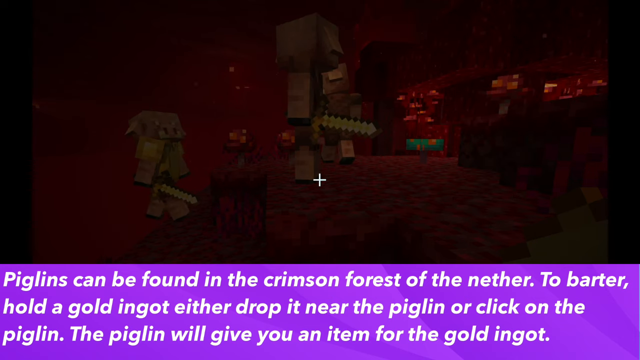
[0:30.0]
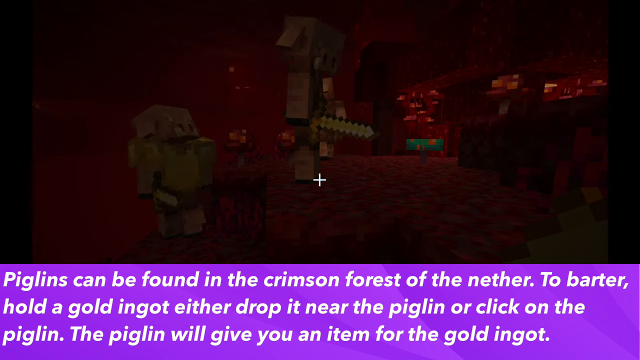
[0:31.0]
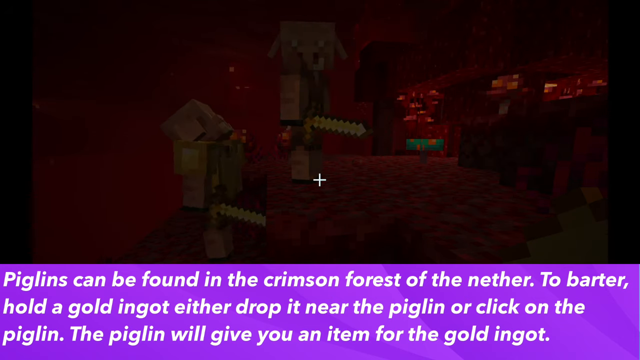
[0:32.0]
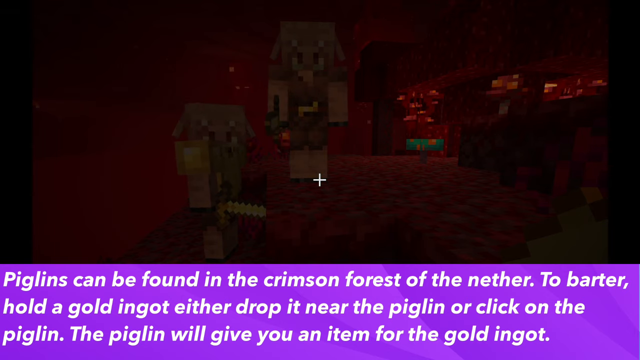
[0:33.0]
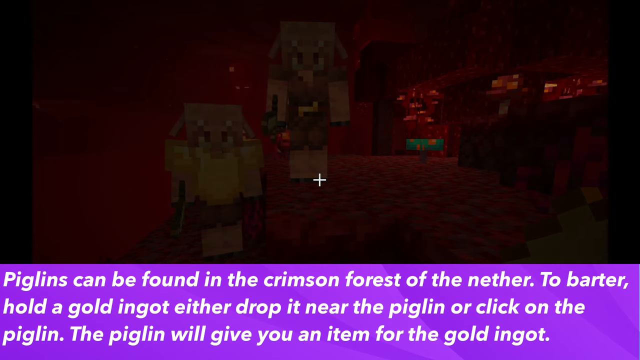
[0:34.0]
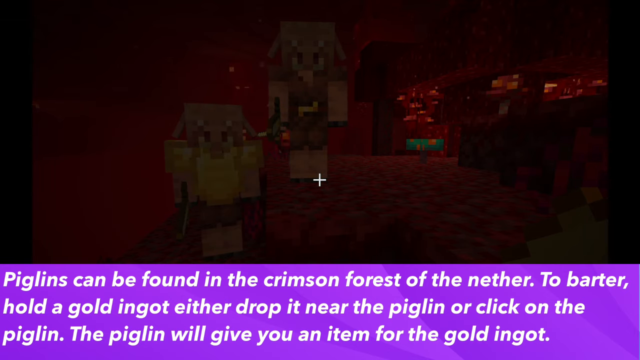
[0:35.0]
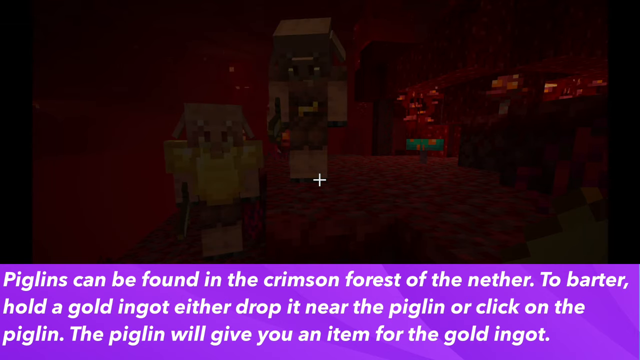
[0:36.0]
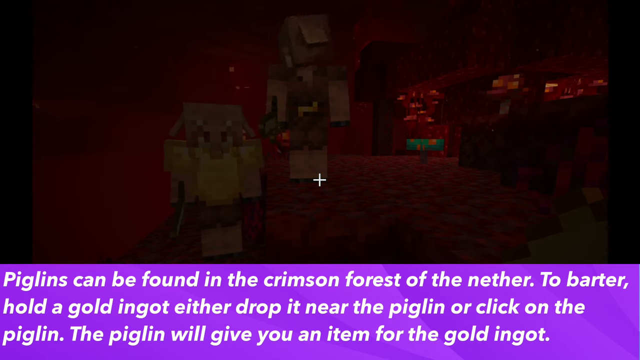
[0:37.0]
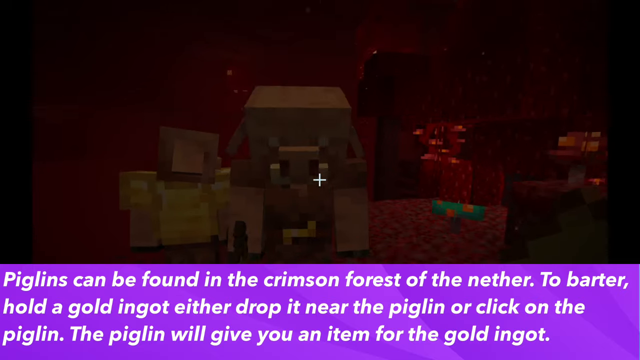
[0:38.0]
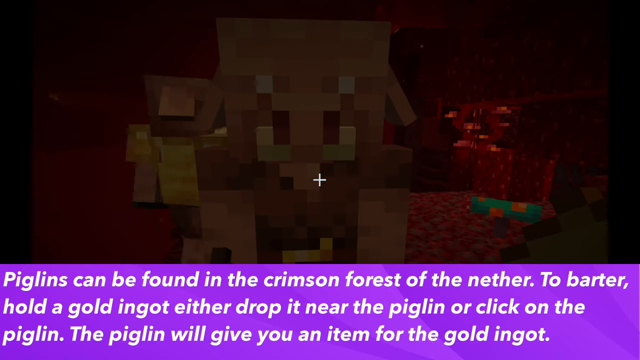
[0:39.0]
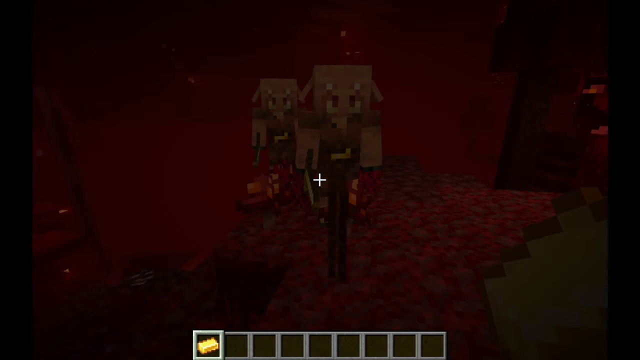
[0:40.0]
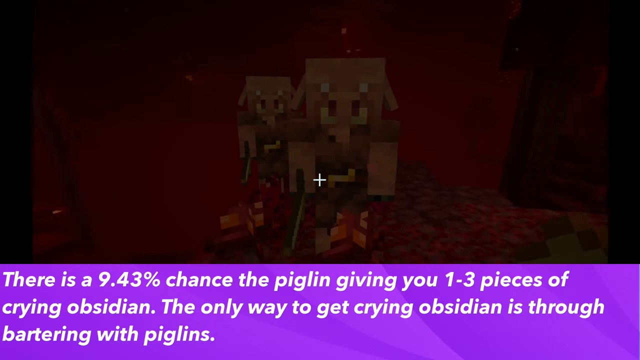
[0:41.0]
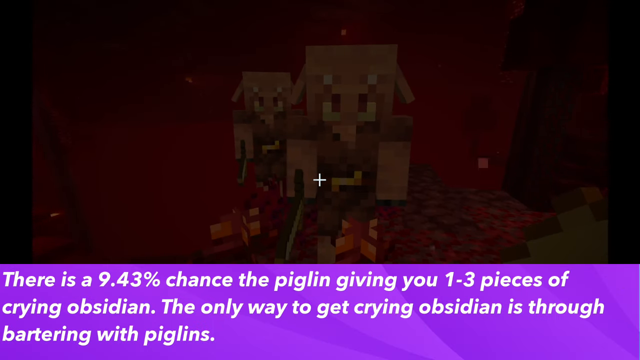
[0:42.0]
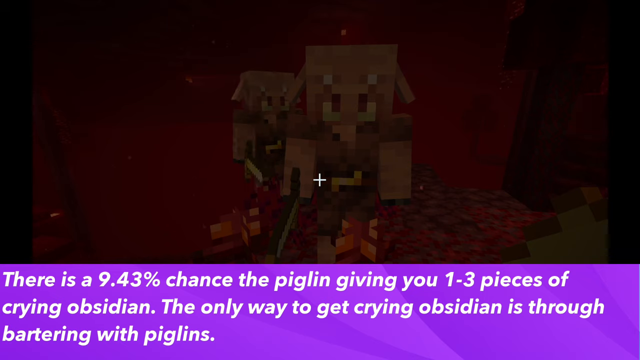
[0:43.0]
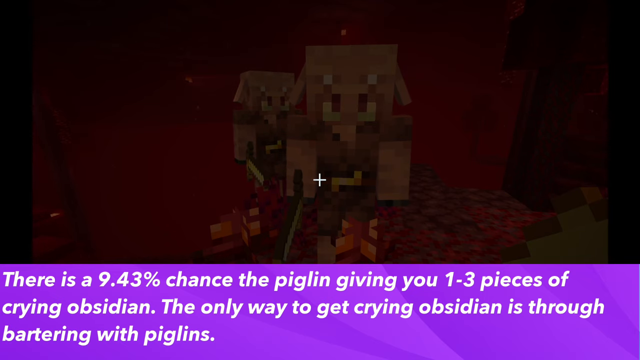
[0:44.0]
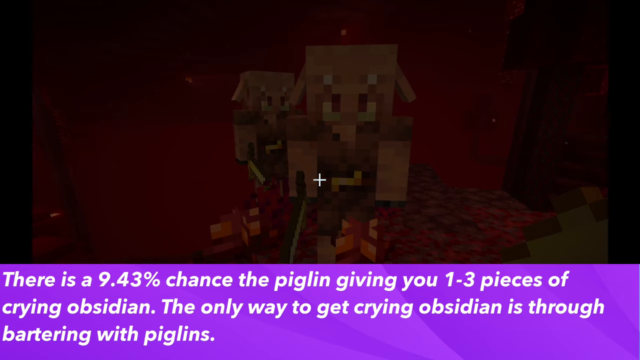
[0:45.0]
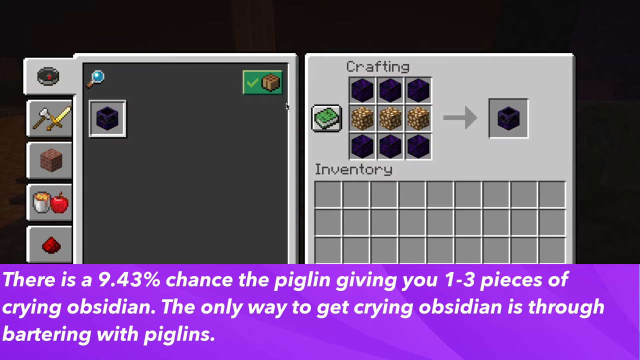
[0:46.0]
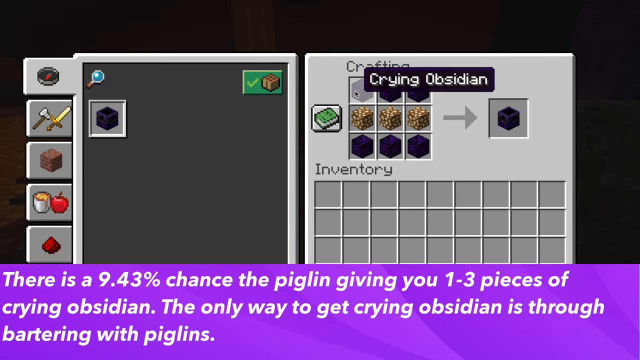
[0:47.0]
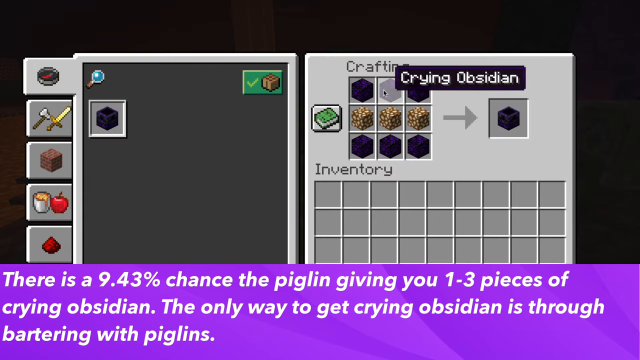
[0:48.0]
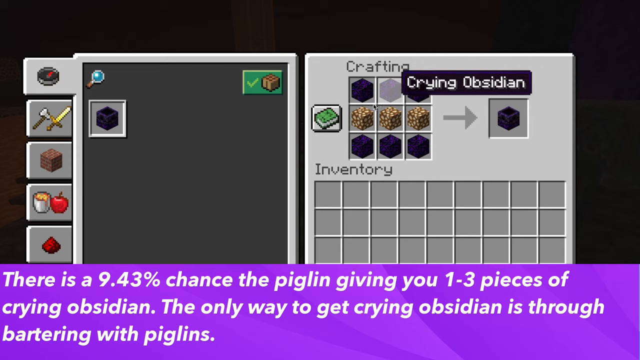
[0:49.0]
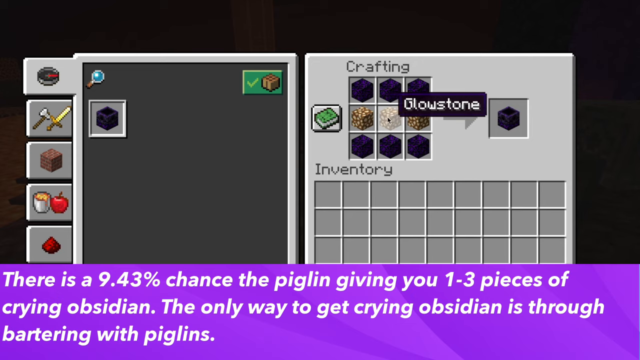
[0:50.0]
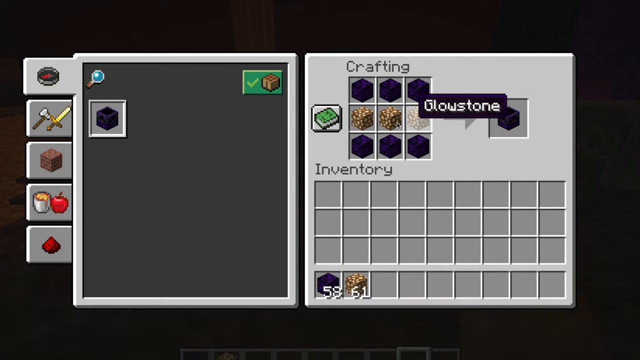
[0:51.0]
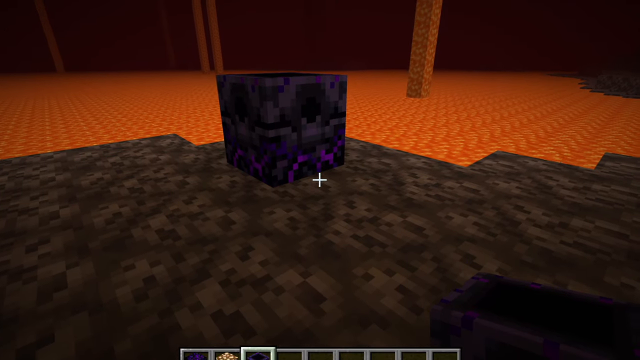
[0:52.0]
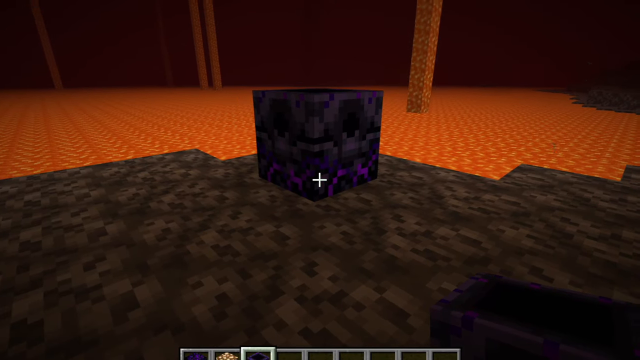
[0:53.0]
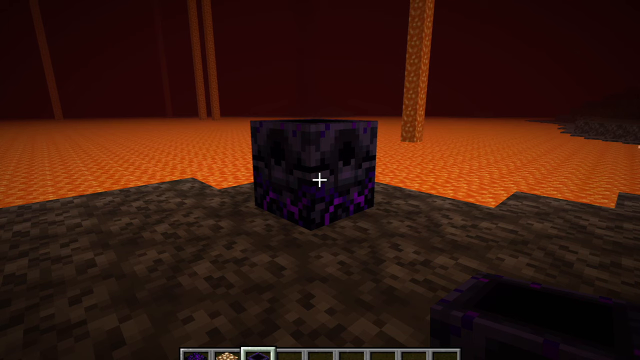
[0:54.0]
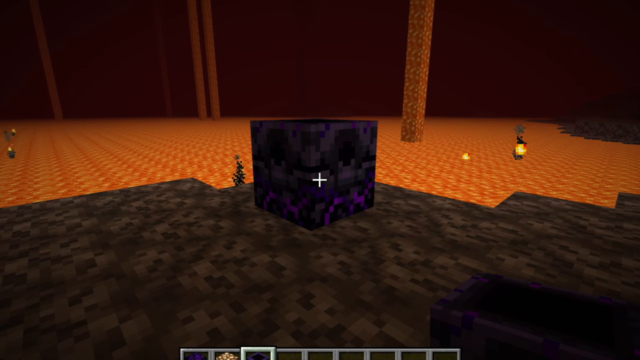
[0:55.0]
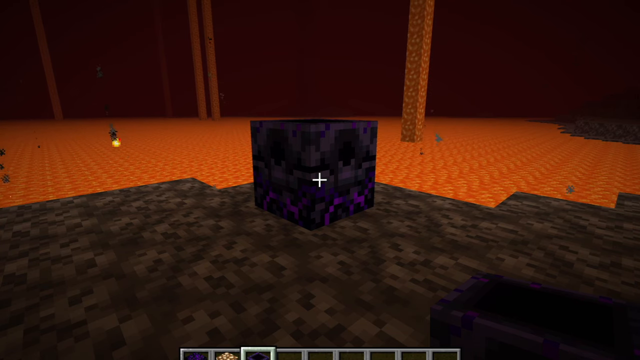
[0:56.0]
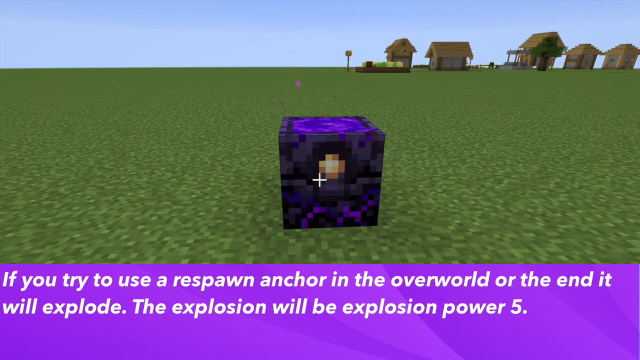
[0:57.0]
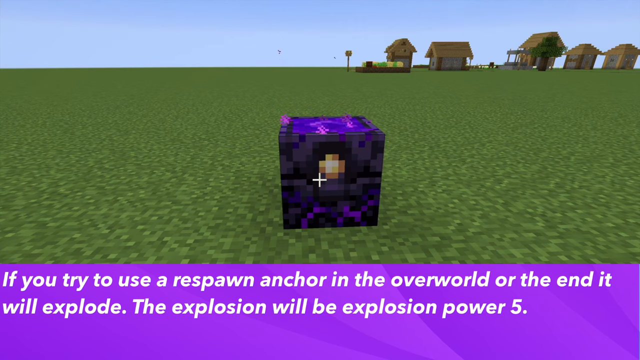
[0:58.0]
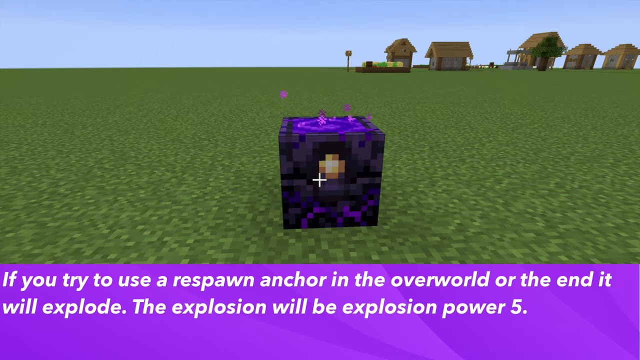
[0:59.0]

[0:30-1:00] The game's on-screen text continues: "piglins can be found in the crimson forest of the nether. To barter, hold a gold ingot. Either drop it near the piglin or click on the piglin. The piglin will give you an item for the gold ingot." Further text reads "There is a 9.43% chance the piglin gives you one to three pieces of crying obsidian" and "The only way to get crying obsidian is through bartering with piglins." Another line begins "If you try to use a respawn anchor in the overworld or the end."